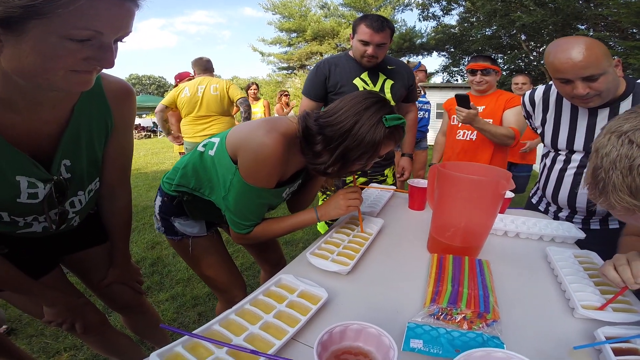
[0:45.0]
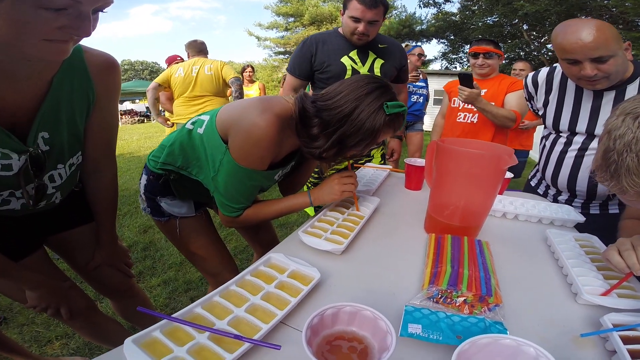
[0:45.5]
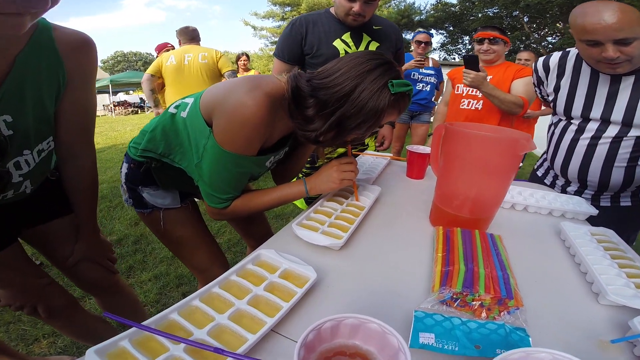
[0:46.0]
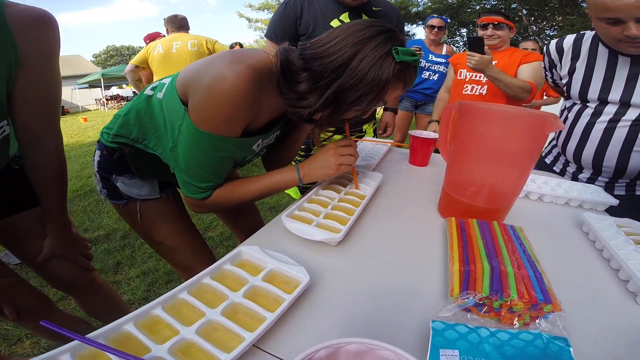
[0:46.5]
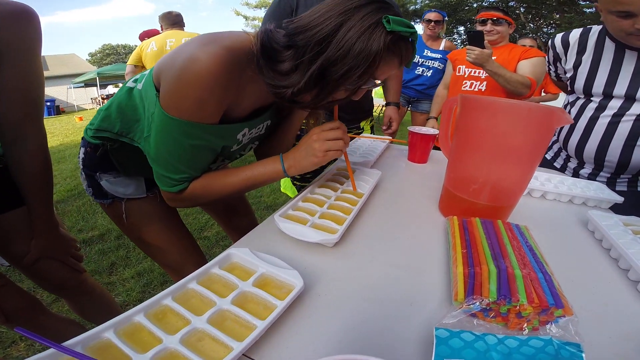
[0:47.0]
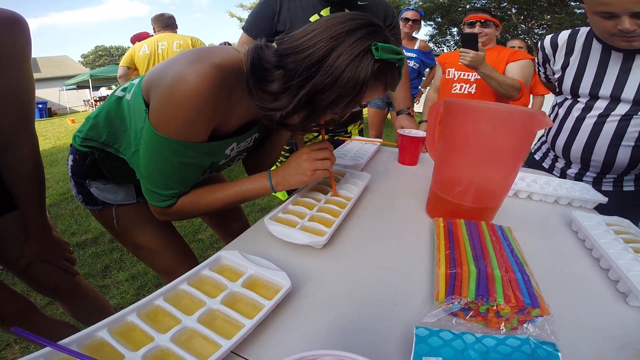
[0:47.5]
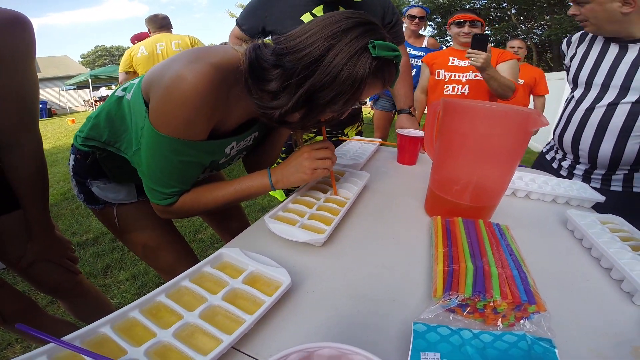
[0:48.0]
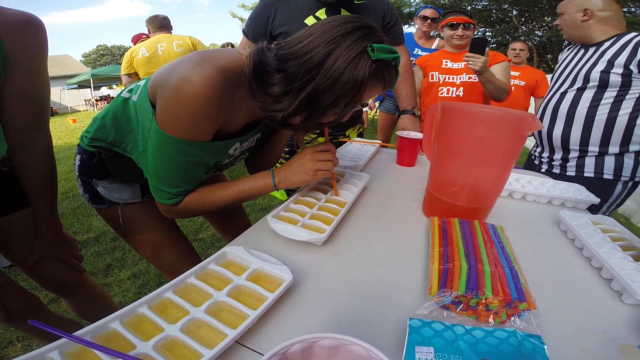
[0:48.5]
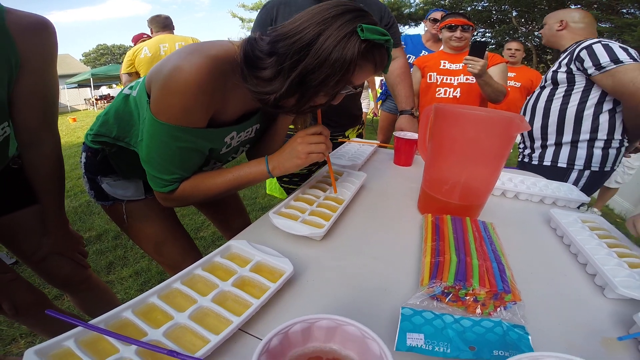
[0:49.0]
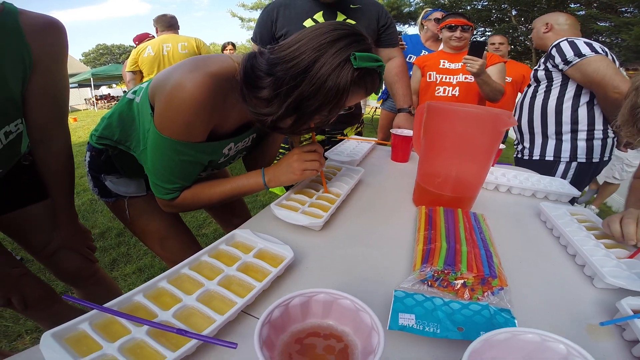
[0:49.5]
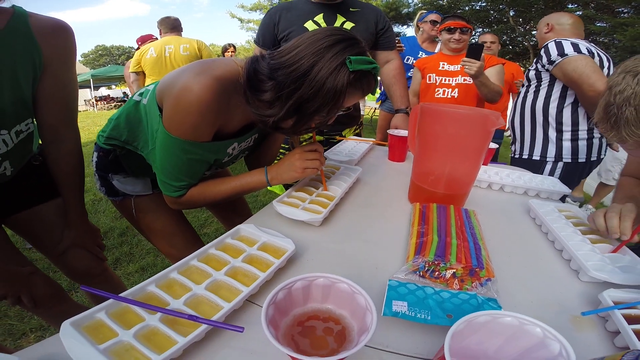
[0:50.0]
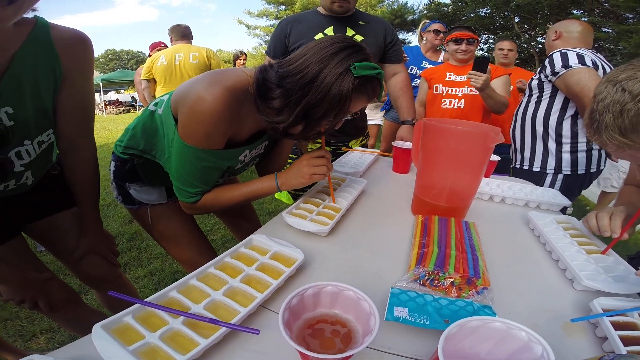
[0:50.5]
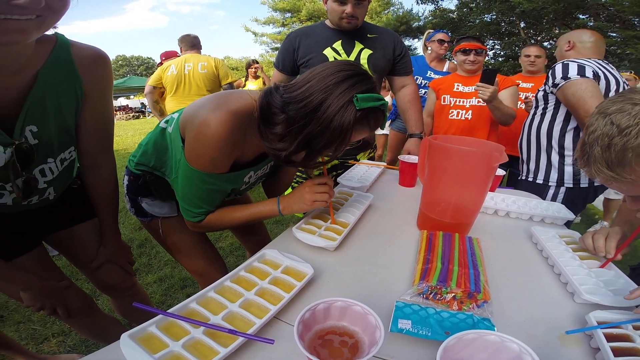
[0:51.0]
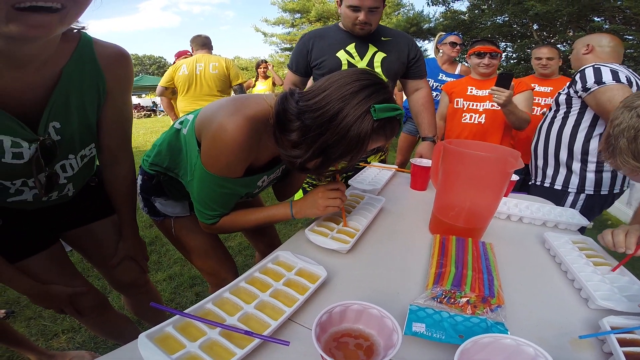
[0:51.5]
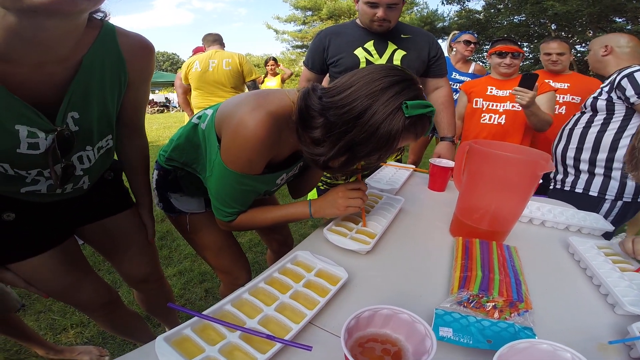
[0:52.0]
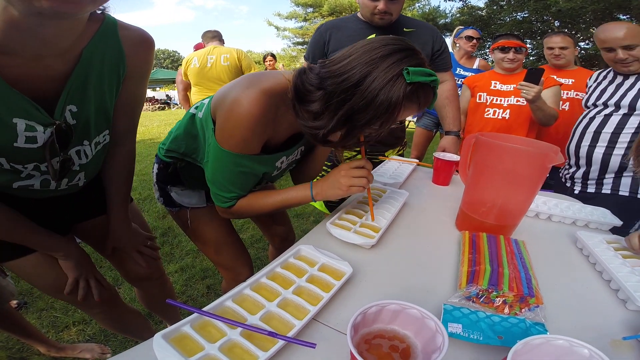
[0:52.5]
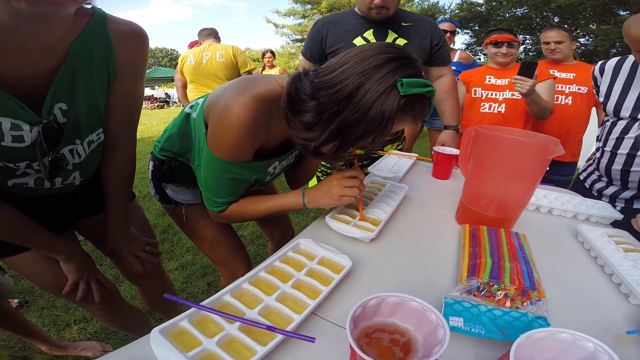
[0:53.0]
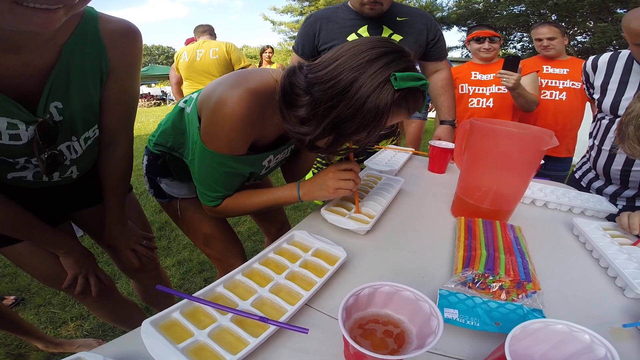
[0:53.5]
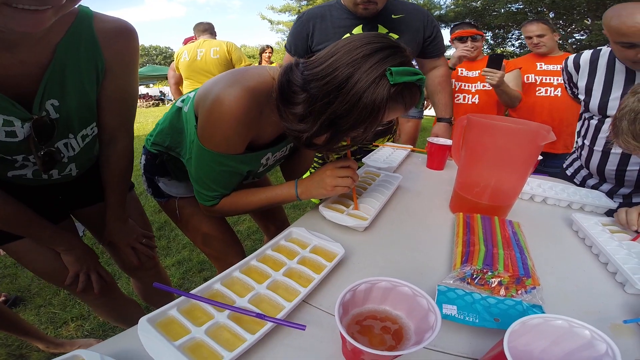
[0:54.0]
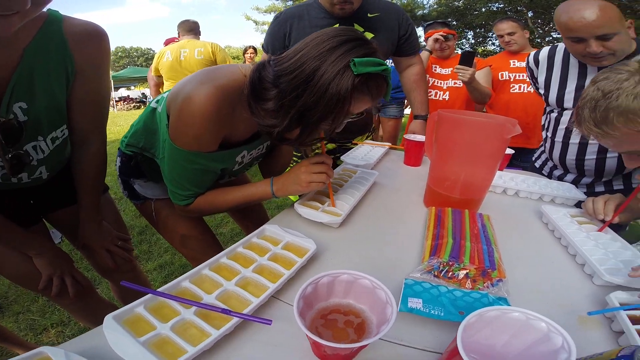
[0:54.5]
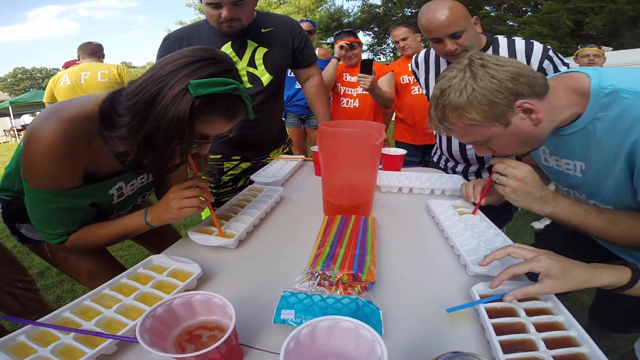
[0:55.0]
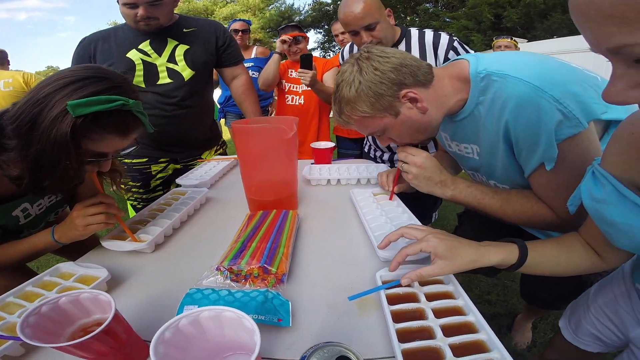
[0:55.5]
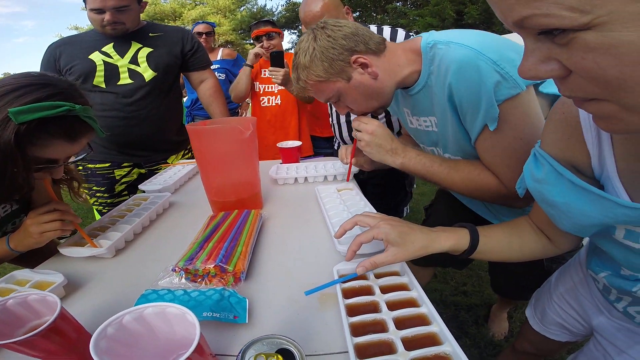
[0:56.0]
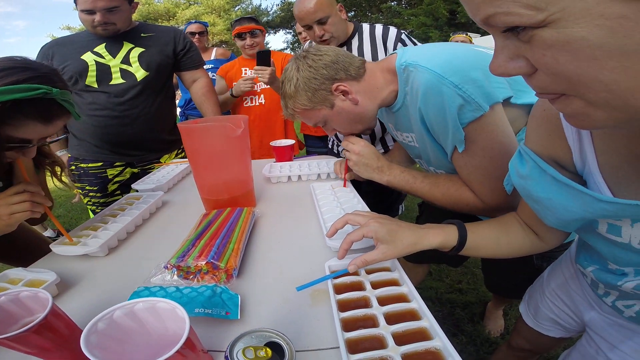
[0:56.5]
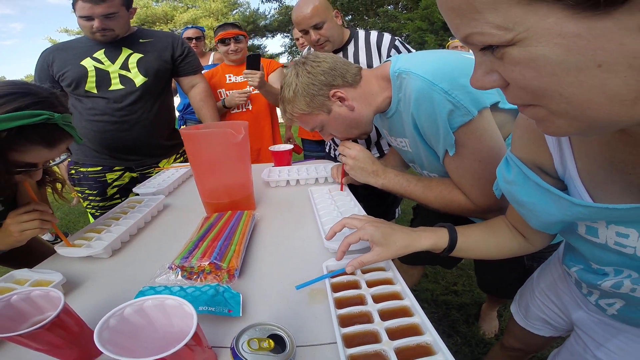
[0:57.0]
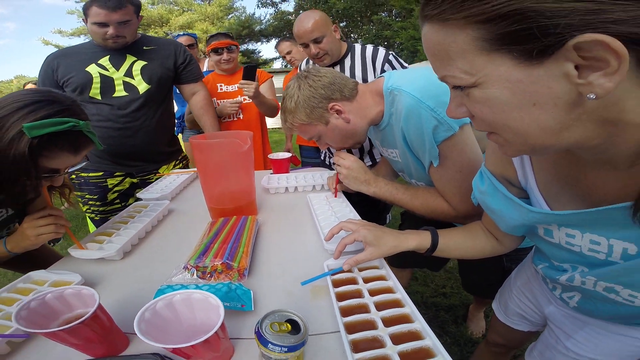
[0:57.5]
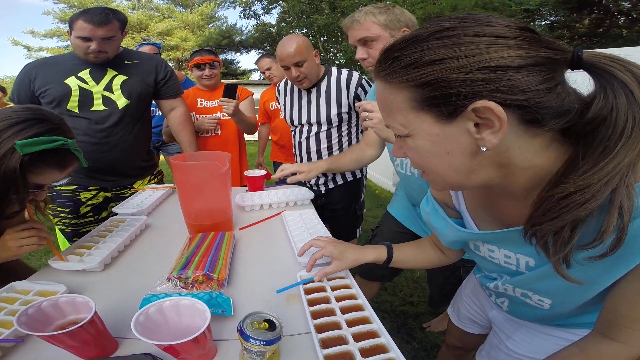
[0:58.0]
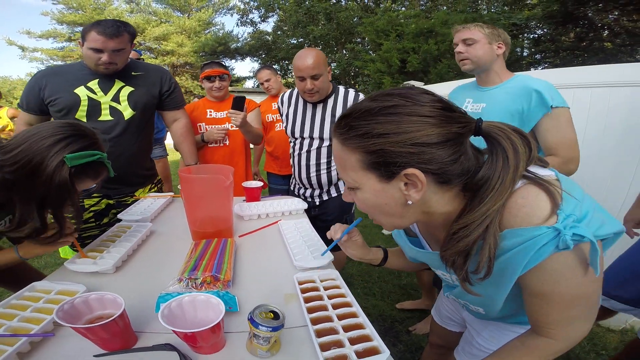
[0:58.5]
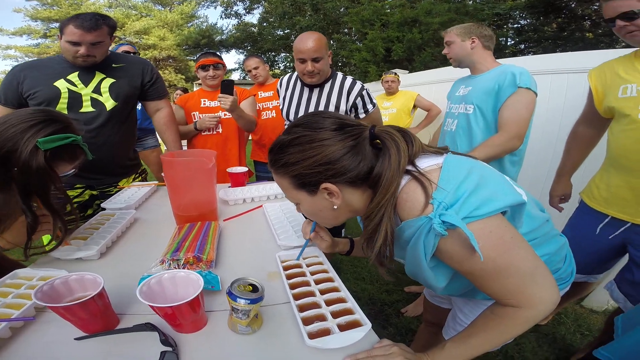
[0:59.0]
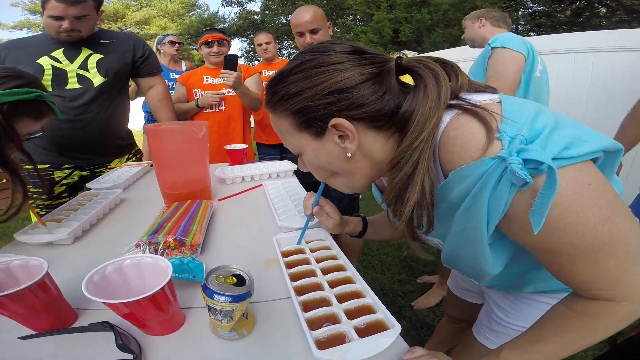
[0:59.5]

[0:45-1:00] As the competition continues, the camera moves close up to the woman on the left in the green shirt, which is sort of falling off her shoulders, showing her bare right shoulder. The camera then pulls away, showing that she is substantially behind her opponent across the table. He finishes and stands up, and the woman to his left grabs her light blue straw and begins drinking. Her beer looks darker brown than the yellow beer everyone else is drinking. Among the spectators at the back center of the table, standing next to the referee, are a couple of men in orange shirts that say "Beer Olympics 2014" in white, apparently participants from other teams. There is also a woman in a medium blue shirt and a couple of people in yellow shirts to the back left. Of the two main competitors, the woman on the left has dark brown hair and the man on the right has lightish blondish hair; he finishes before her, stands up and walks away from the table as his partner takes over. That partner has sort of brown hair tied up in a ponytail and leans over with her blue straw to drink her brownish liquid from the ice cube tray. She wears a black wristwatch on her right wrist, and she and everybody else appear to be wearing shorts.